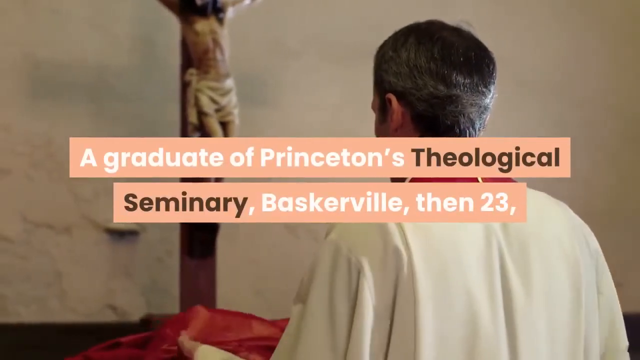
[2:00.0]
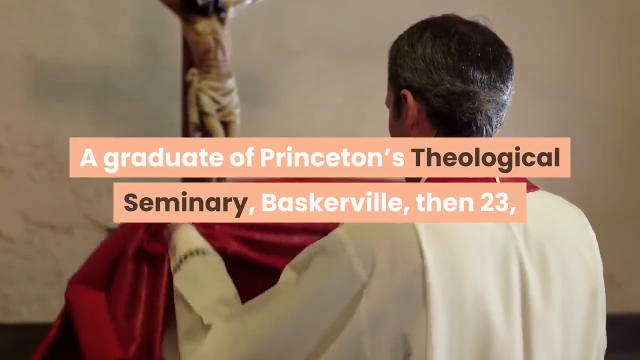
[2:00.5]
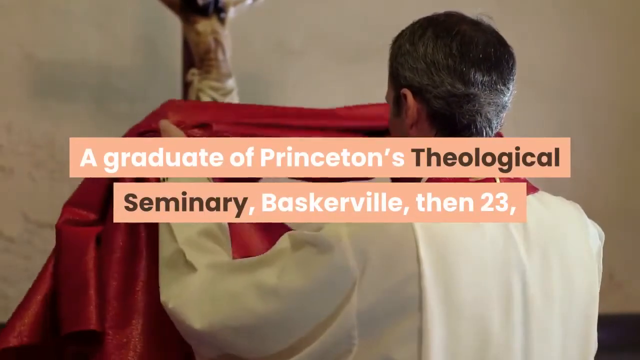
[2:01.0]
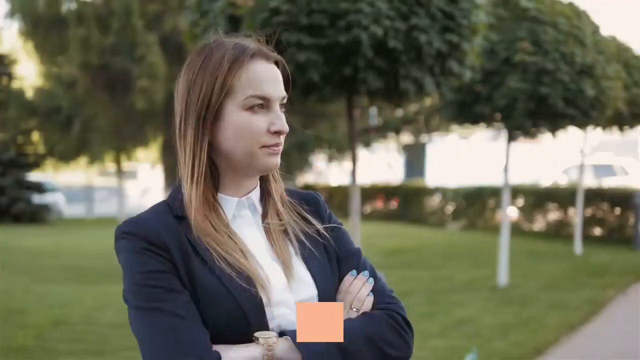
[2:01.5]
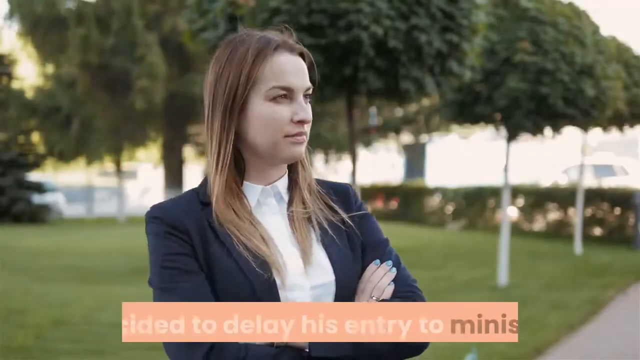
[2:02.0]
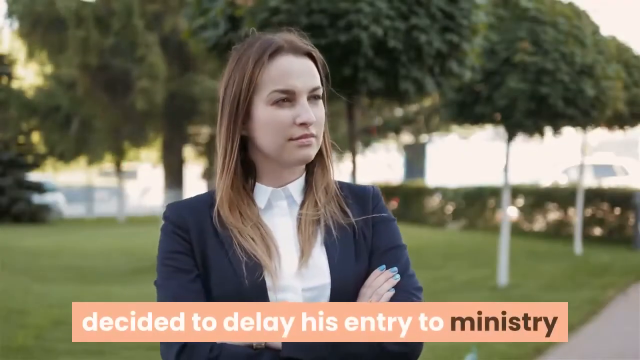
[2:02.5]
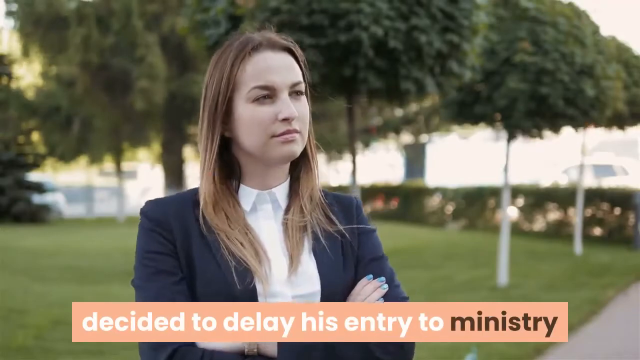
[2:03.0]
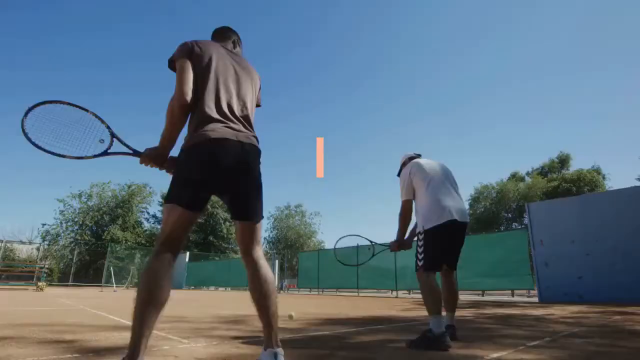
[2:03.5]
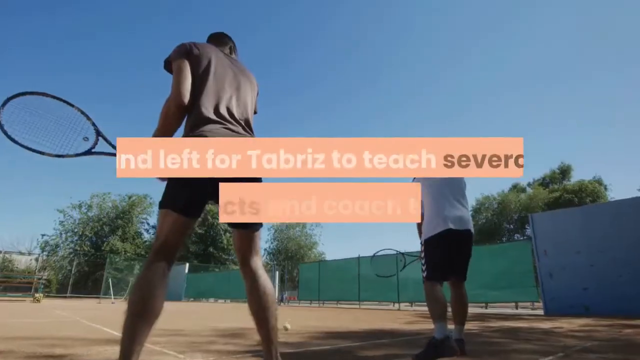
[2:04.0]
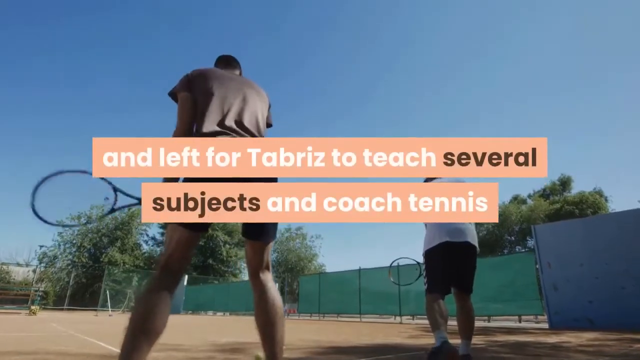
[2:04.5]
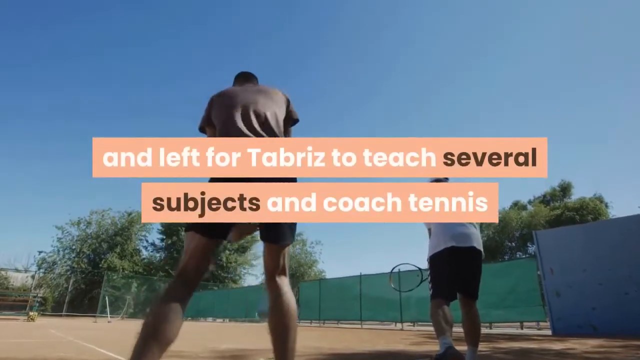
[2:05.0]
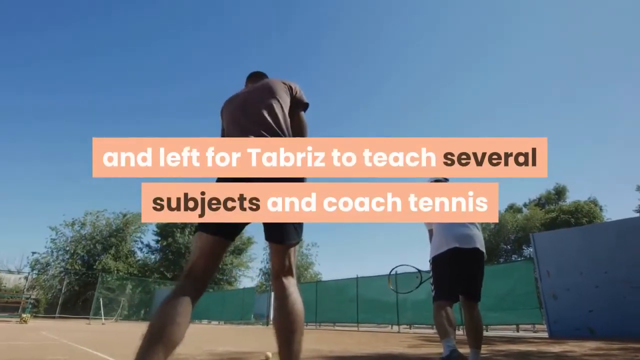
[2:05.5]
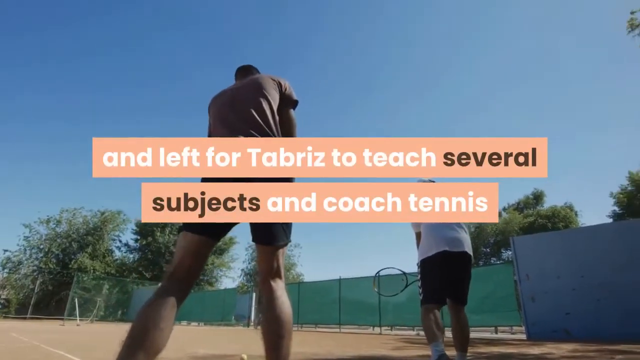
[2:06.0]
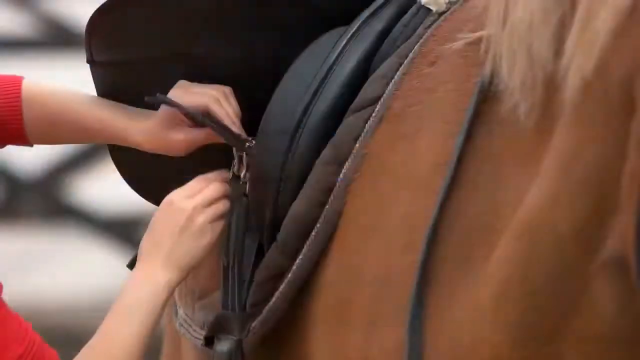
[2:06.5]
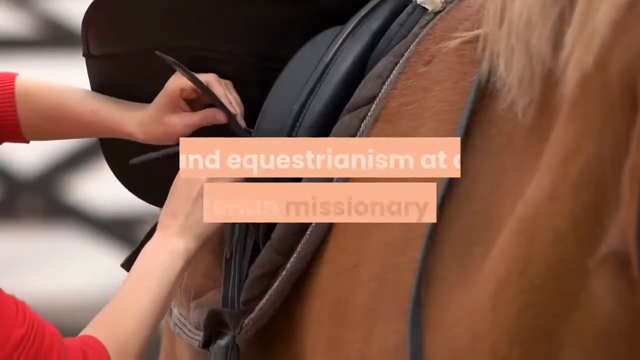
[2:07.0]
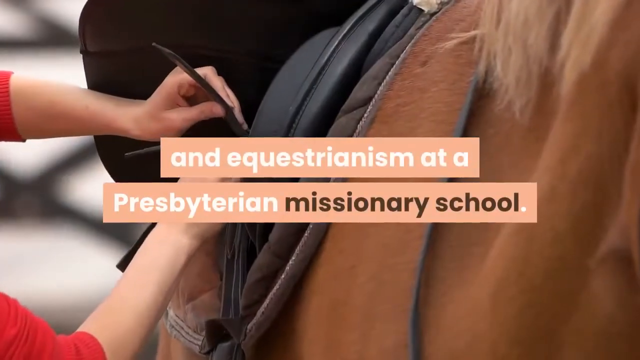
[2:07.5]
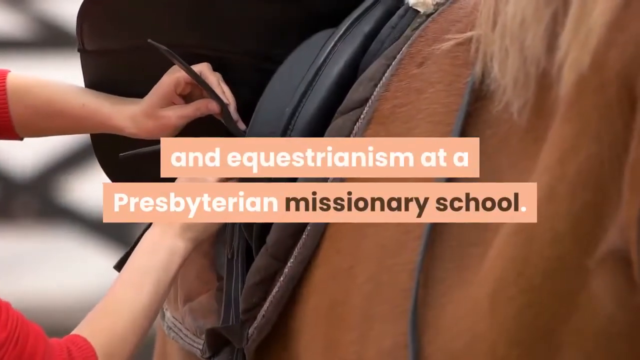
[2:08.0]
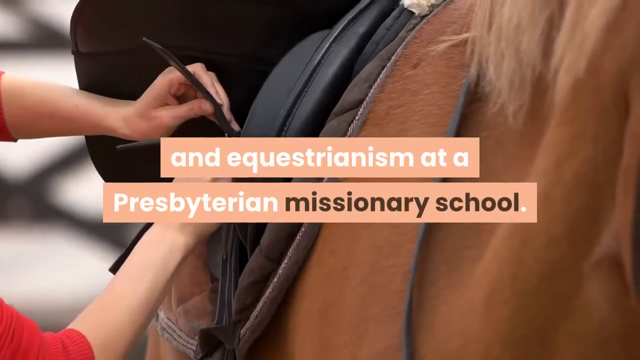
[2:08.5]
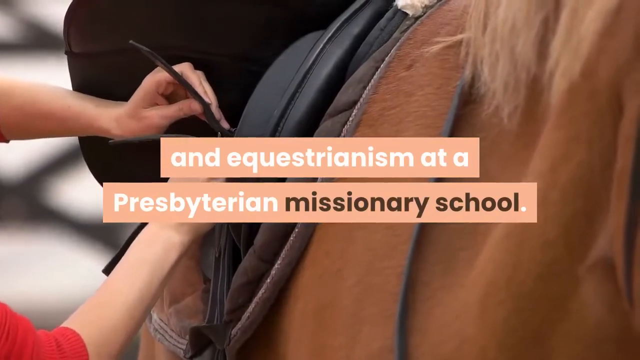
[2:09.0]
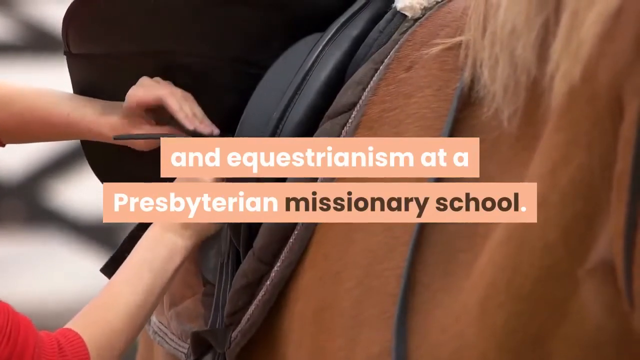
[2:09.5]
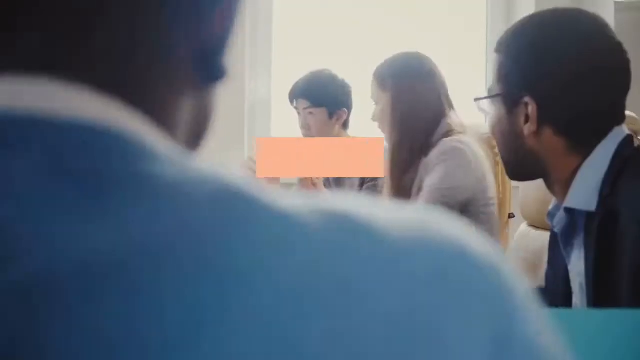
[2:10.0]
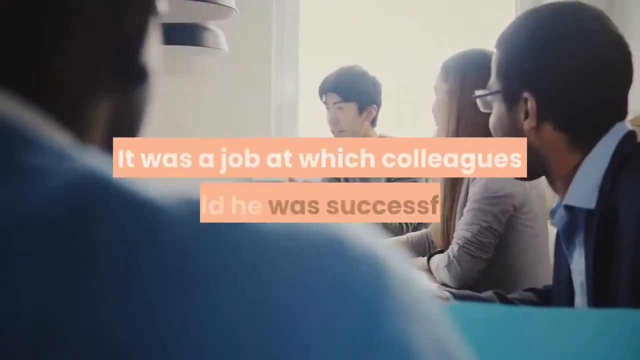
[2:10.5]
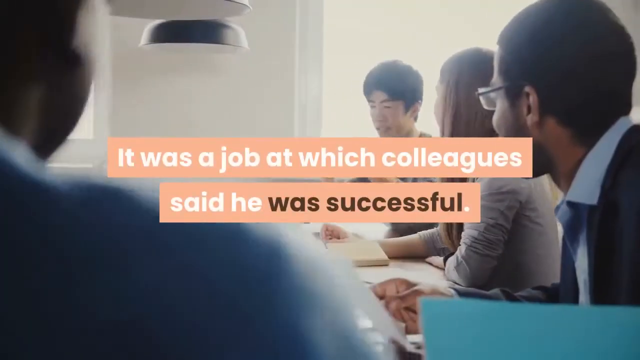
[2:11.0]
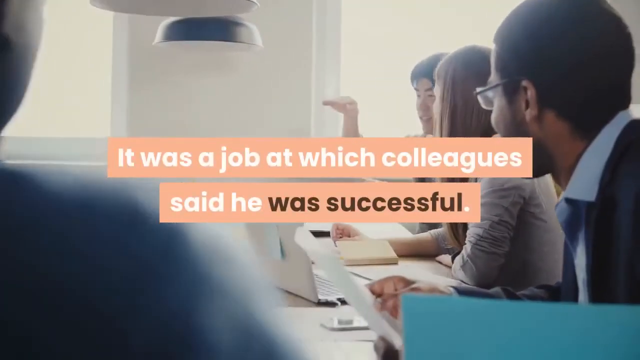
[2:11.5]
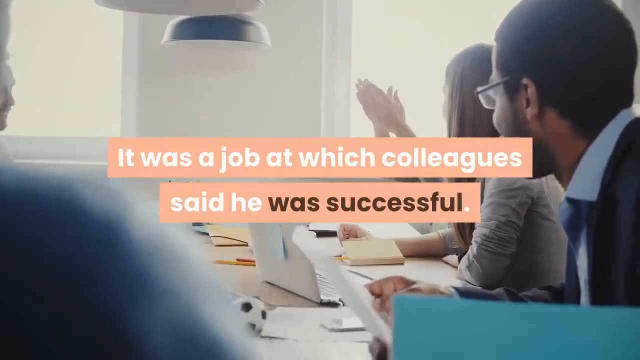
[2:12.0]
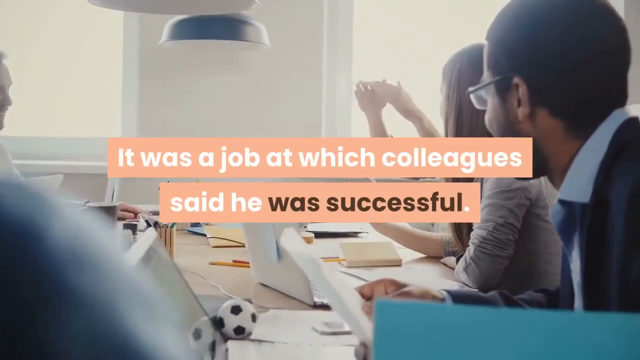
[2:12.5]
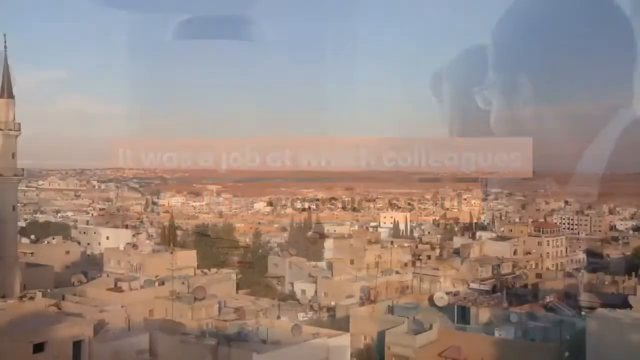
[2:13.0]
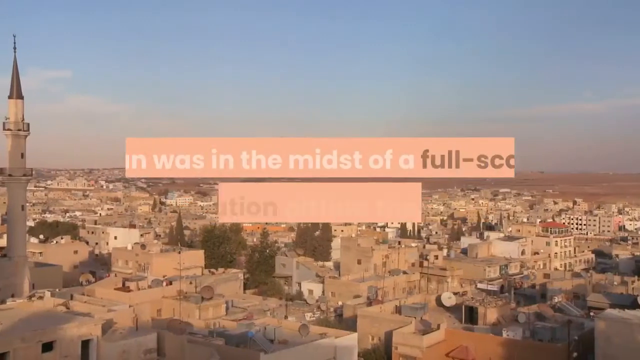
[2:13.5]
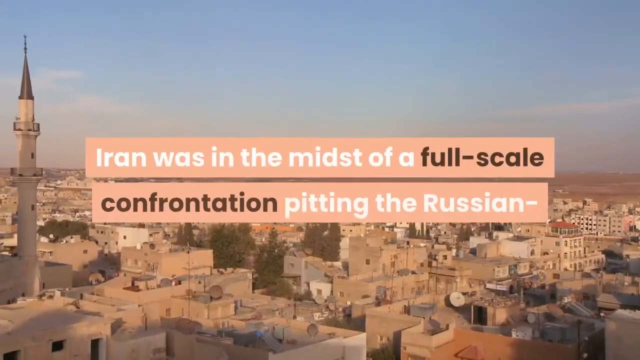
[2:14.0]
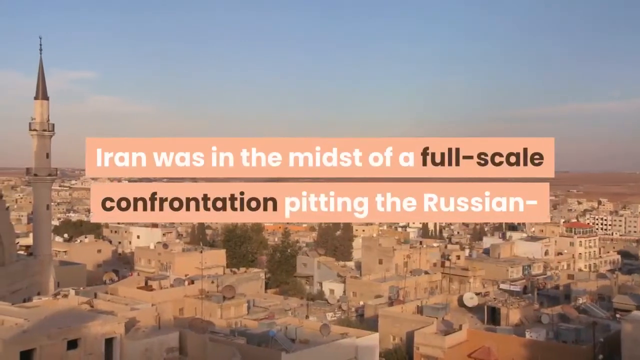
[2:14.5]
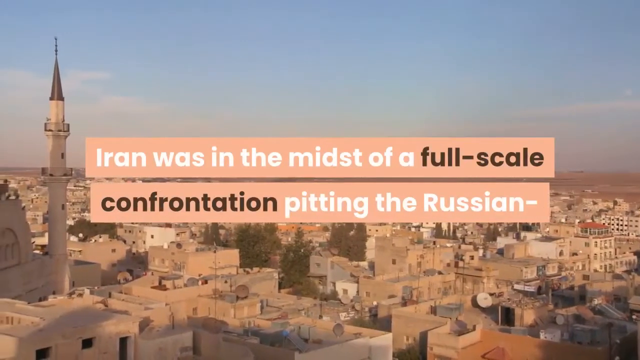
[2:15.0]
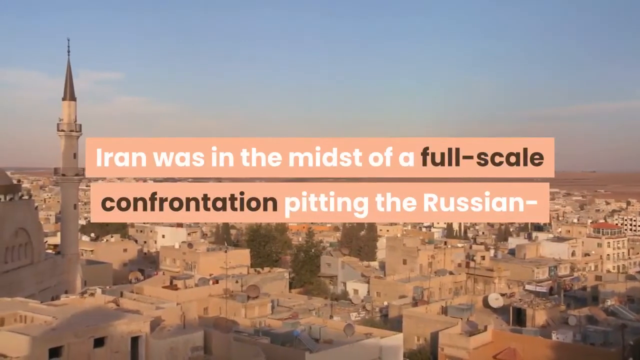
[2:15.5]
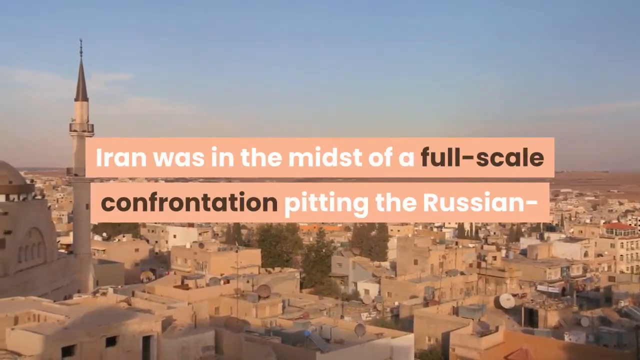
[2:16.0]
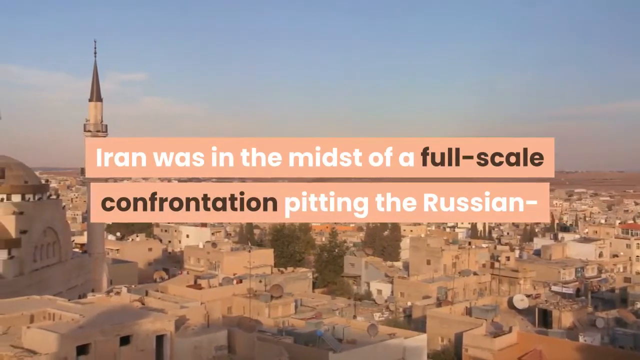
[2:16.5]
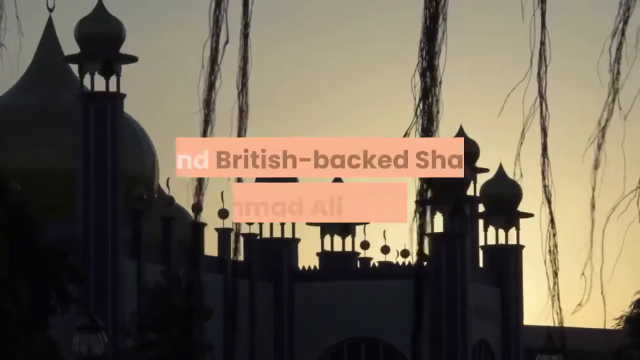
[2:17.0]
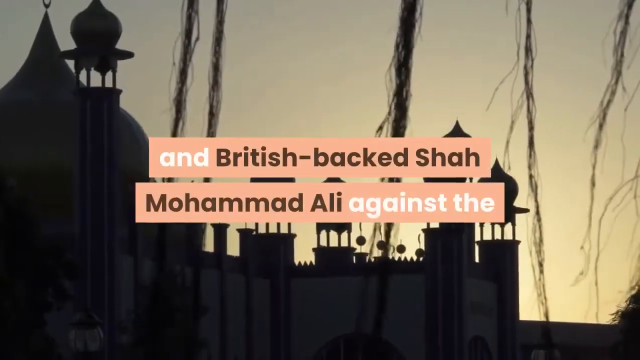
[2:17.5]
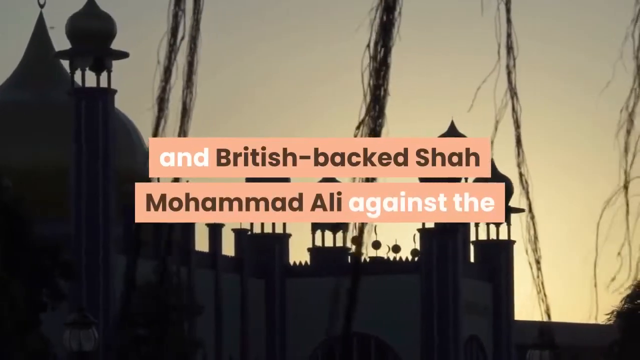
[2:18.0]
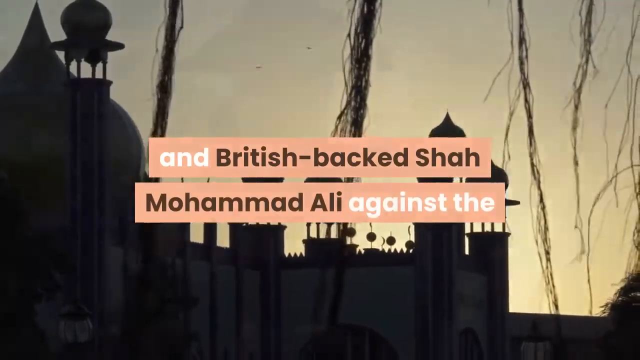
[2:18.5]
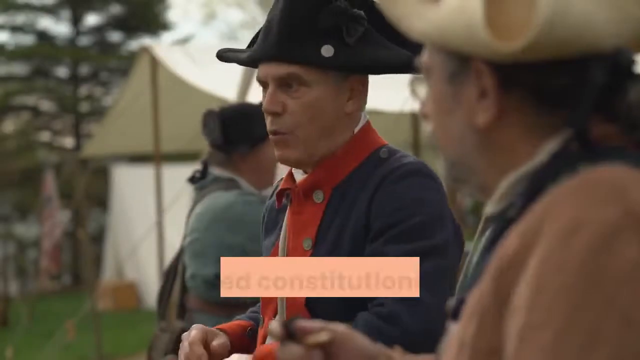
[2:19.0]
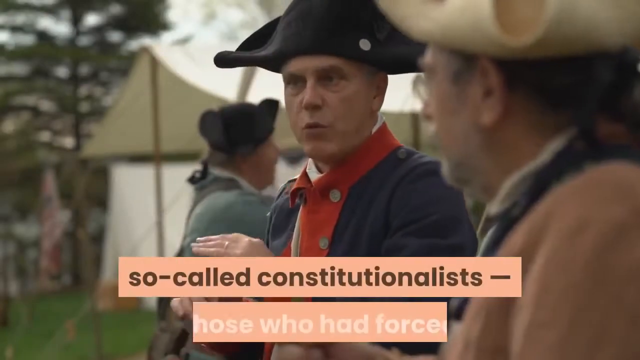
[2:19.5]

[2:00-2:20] The priest standing at the altar in front of the crucifix raises a red cloth. Then a woman in a suit stands with her arms crossed in a park, looking angry. Two men play tennis, standing side by side, each holding a racket, so they are probably playing doubles. Next, a close-up of a woman and a horse shows only the side of the horse, the saddle, and the woman's hands and arms as she adjusts the saddle. Several young people, including an Asian person, a woman and an African American, sit around a cluttered table at some type of meeting. An aerial view shows an Iranian city, probably Tehran. Another view of the city follows at dusk, with the buildings in shadow and stringy moss hanging down in front of the camera. Then a scene from the American Revolution shows a commander speaking to soldiers in some type of camp. The on-screen text says Baskerville went to Iran to teach English and equestrian skills at a Presbyterian school.